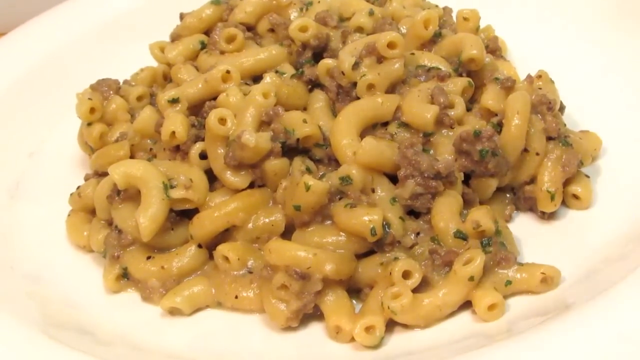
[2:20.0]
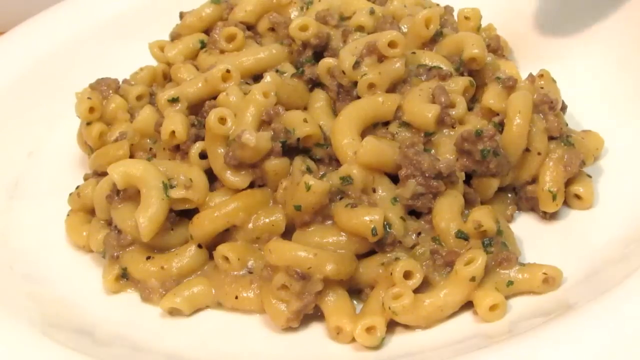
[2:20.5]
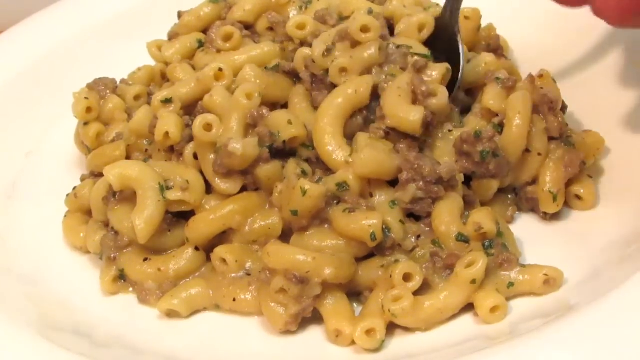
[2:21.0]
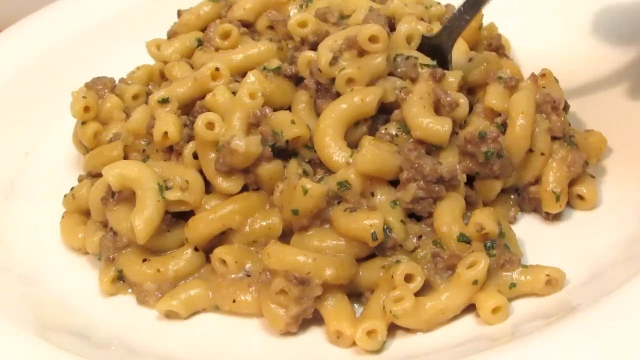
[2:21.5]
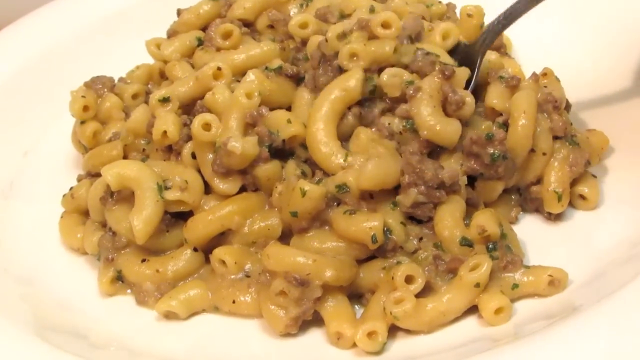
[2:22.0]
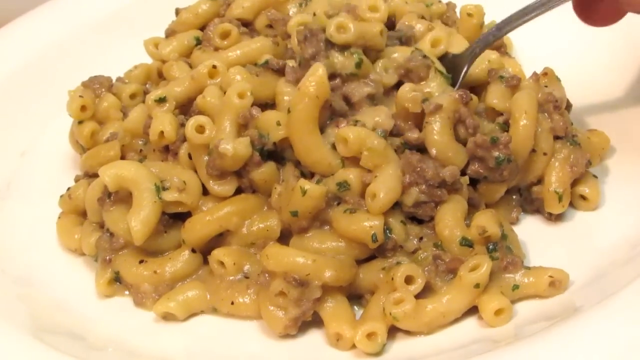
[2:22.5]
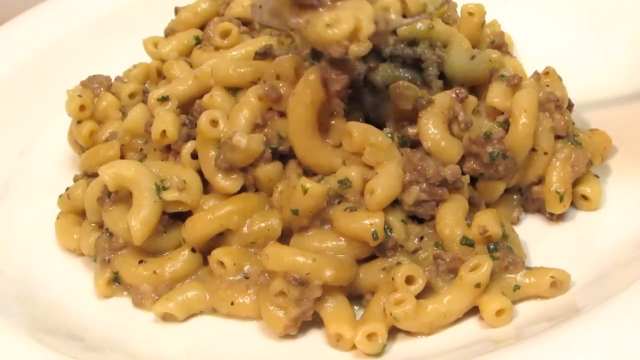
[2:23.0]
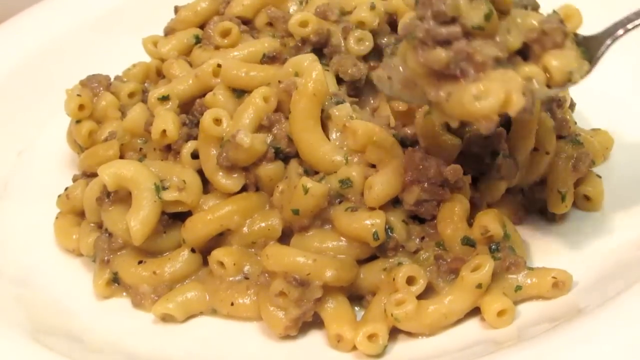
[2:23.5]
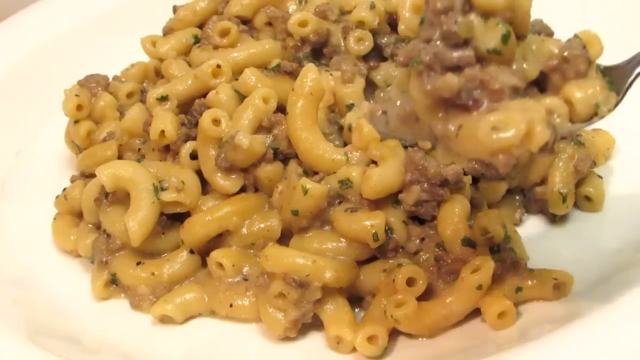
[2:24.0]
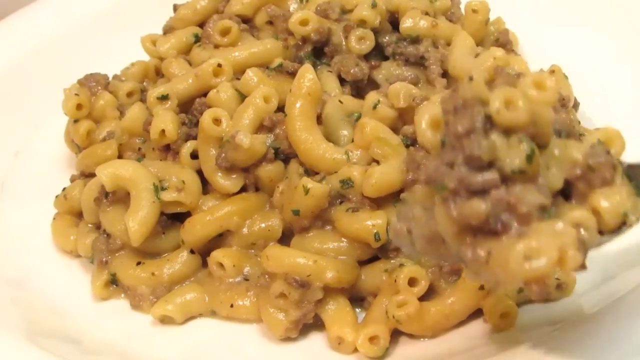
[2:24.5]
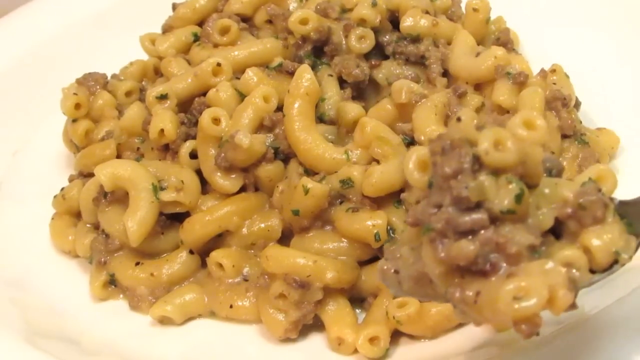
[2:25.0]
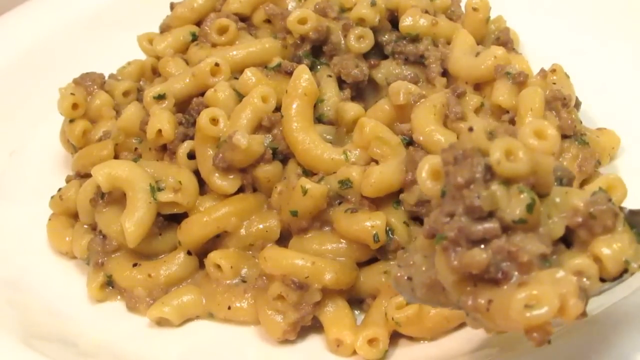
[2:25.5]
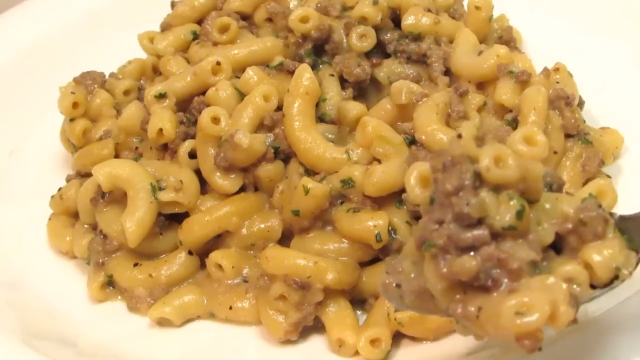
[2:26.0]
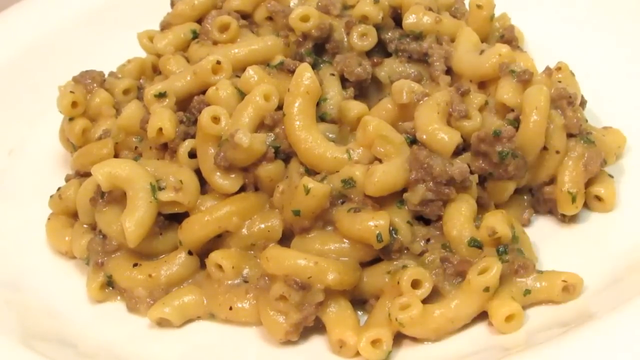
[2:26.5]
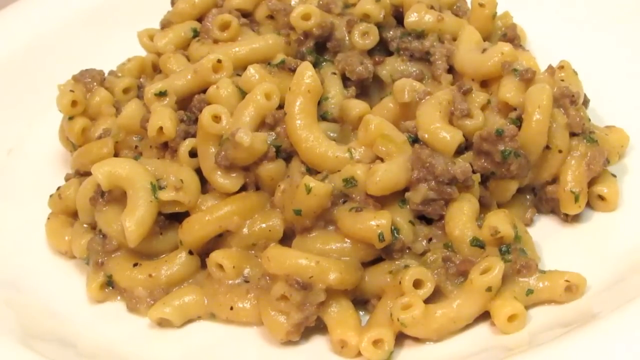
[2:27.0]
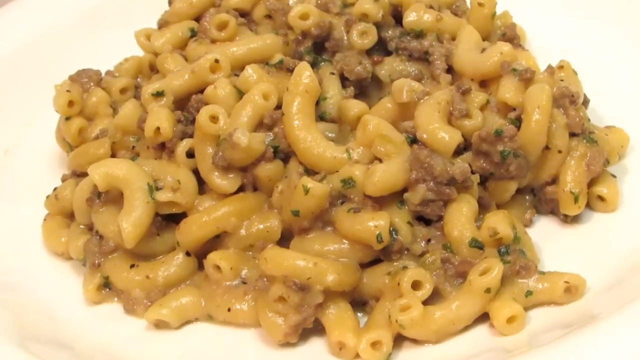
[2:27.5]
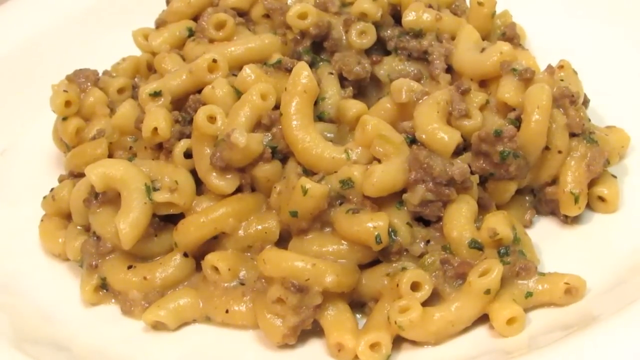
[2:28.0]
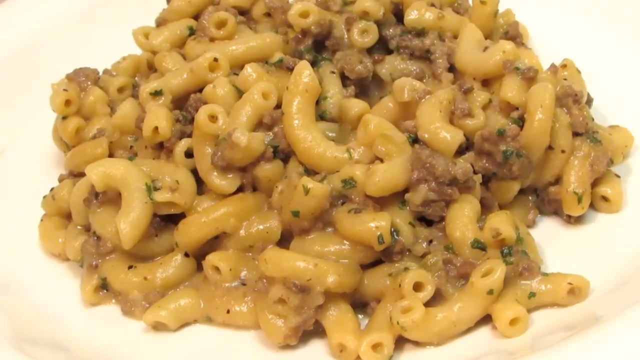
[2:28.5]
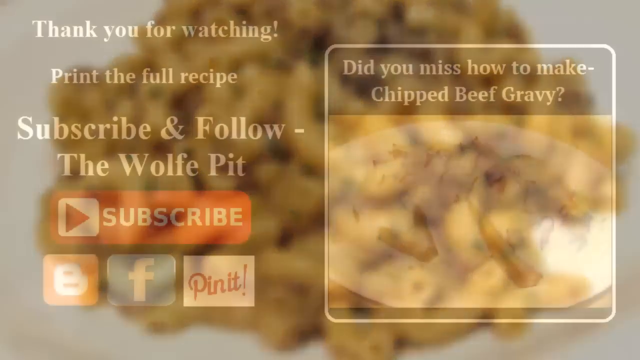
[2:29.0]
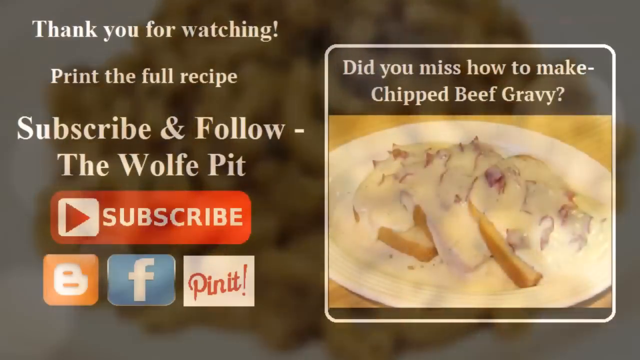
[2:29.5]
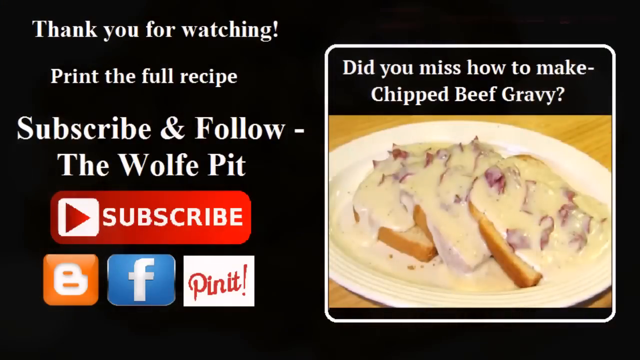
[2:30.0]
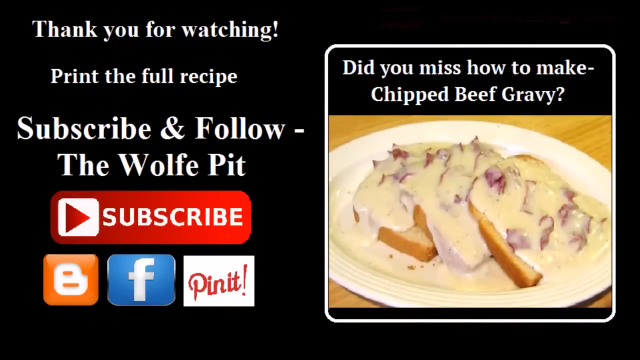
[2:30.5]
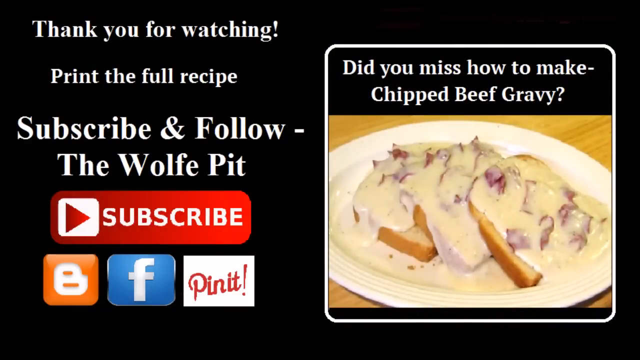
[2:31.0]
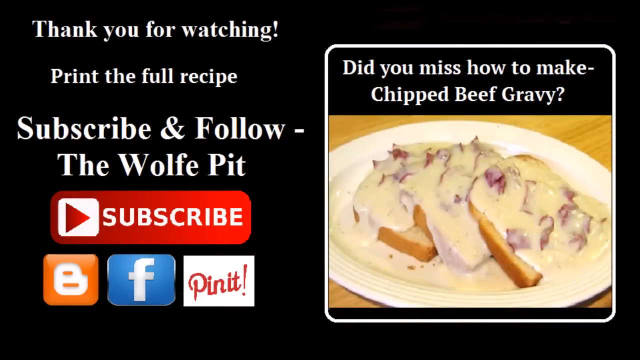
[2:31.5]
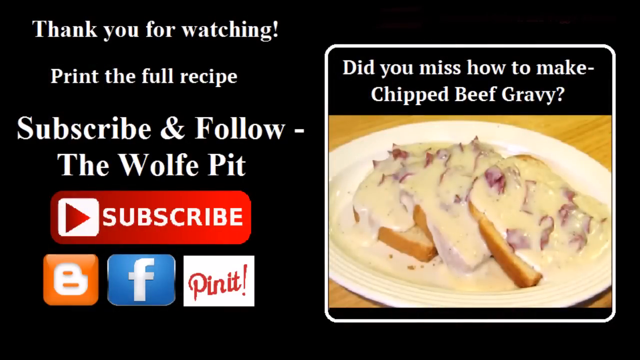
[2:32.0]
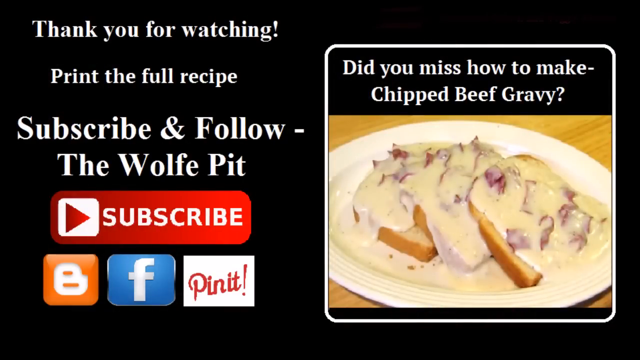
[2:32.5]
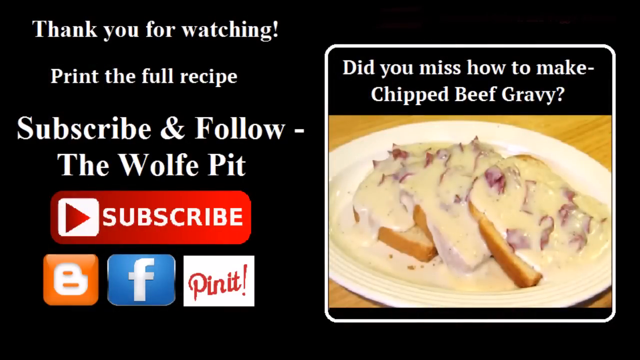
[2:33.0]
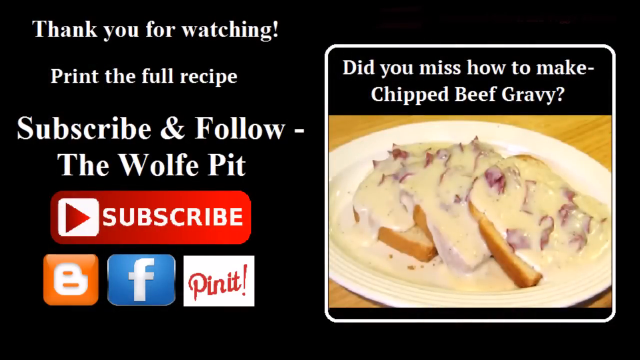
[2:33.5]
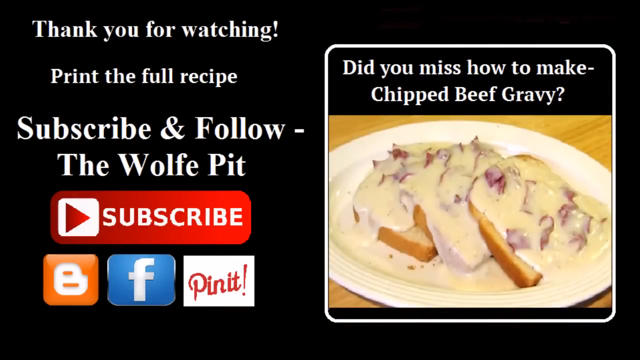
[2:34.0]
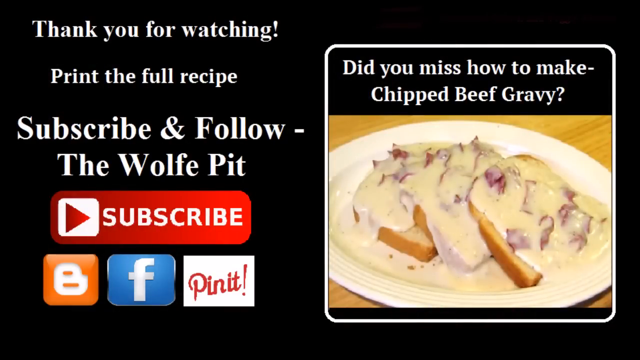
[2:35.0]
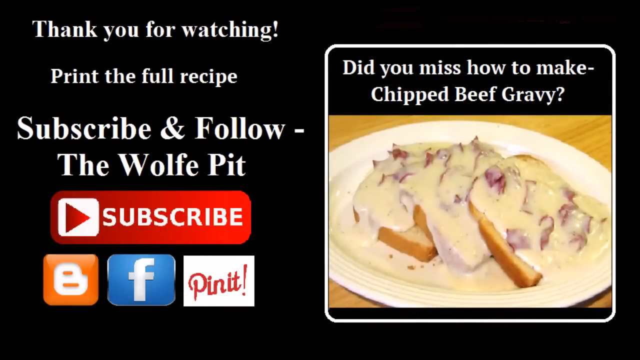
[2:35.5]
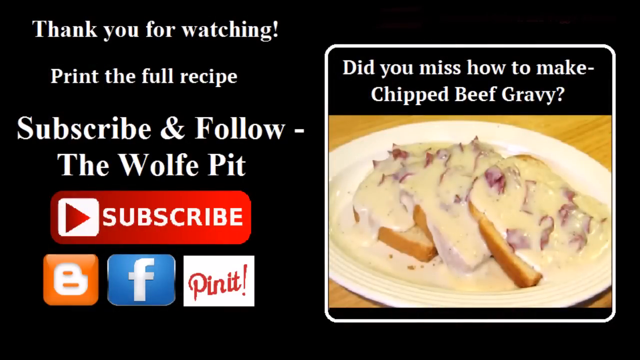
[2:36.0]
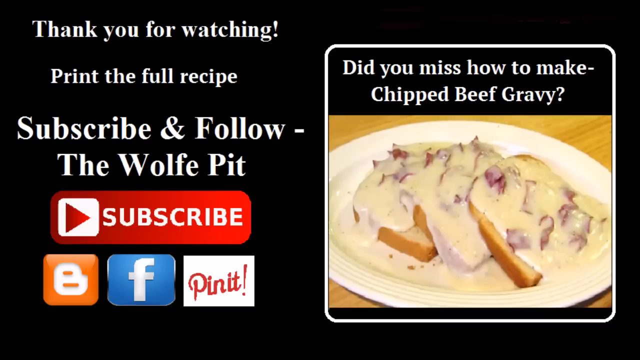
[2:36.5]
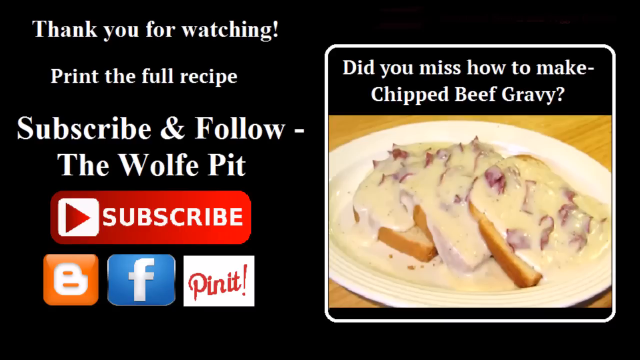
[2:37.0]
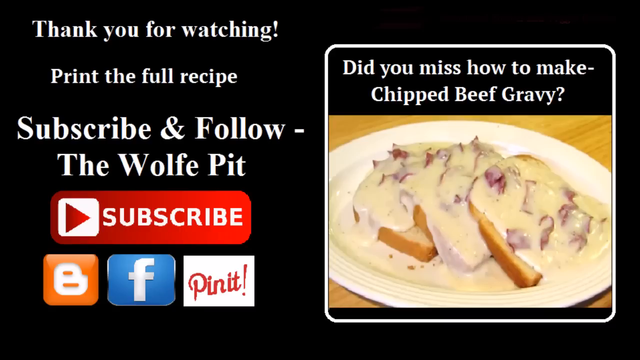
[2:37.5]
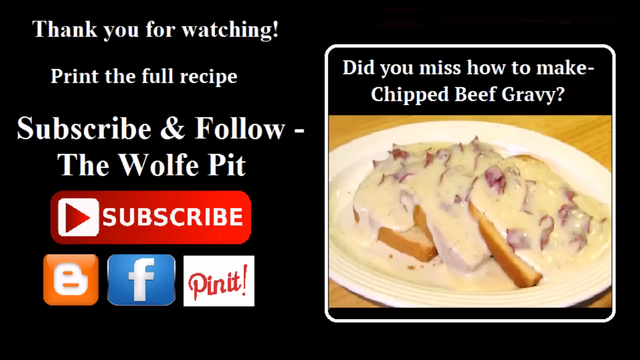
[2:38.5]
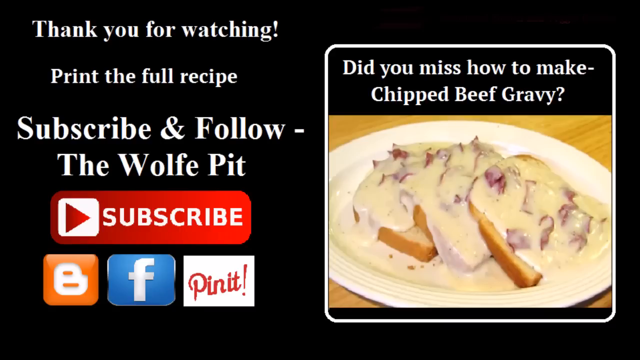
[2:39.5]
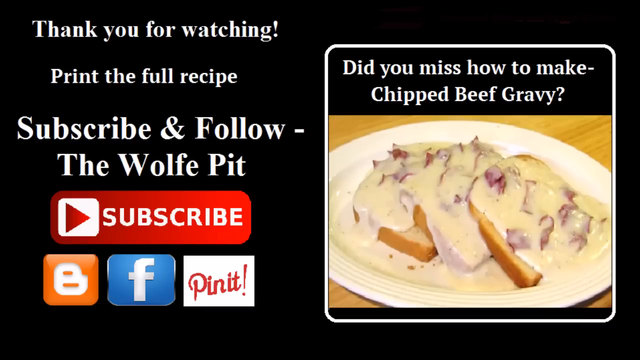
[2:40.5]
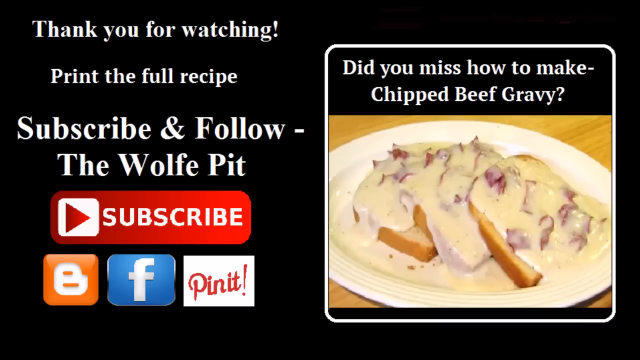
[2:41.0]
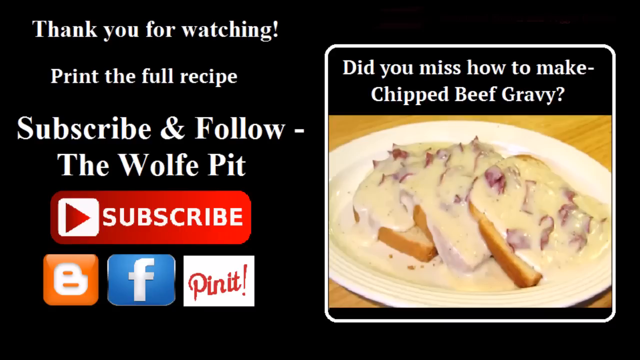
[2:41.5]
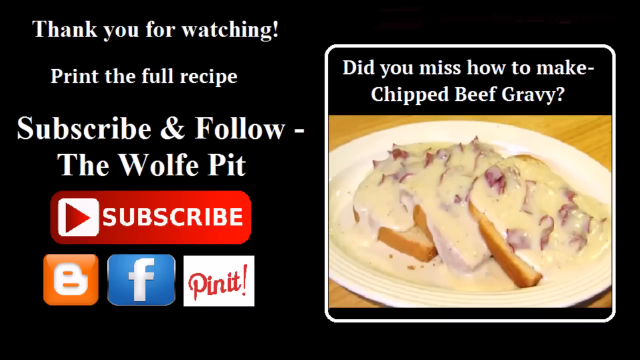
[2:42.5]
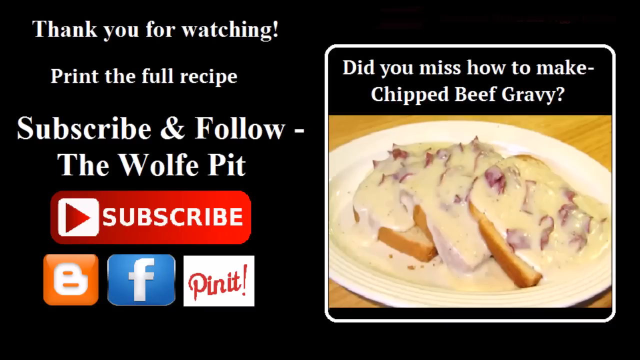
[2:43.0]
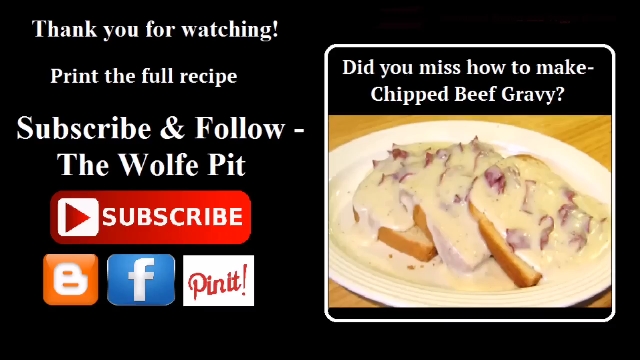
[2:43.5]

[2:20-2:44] The food is dished on a plate and looks juicy, with the green spice she added last. She takes a spoon, most possibly a tablespoon, scoops a heap of the macaroni cheese, and brings it close to the camera for a closer look. The video finishes with a black background and text. On the left side, white text reads "Thank you for watching. Print the full recipe. Subscribe and follow the Wolf's Pit." There is a subscribe button and what appear to be social media icons, including Facebook. On the right side, there is a plate of food that looks like a piece of bread with sauce on top, and she says, "did you miss how to make chipped beef gravy?"